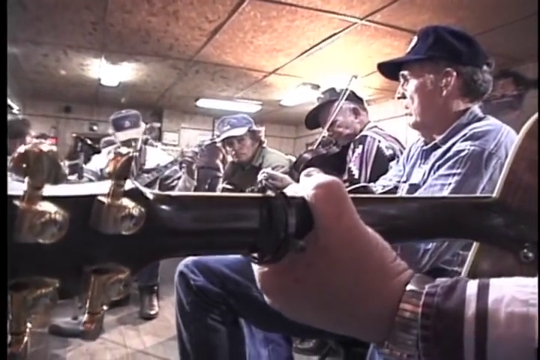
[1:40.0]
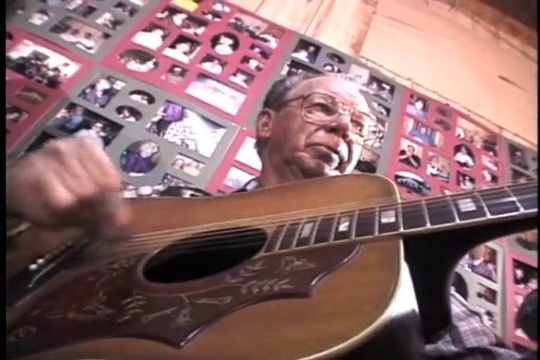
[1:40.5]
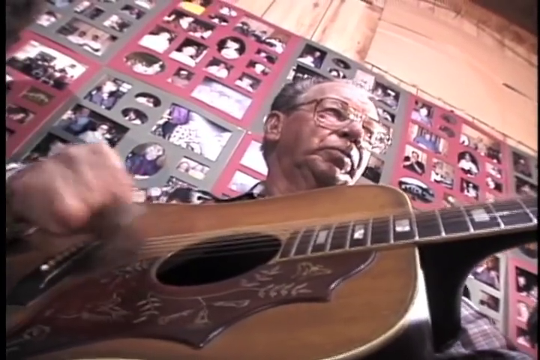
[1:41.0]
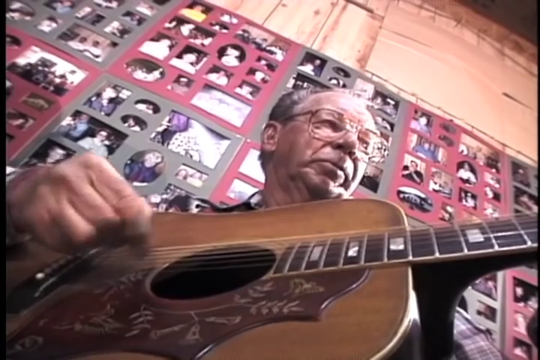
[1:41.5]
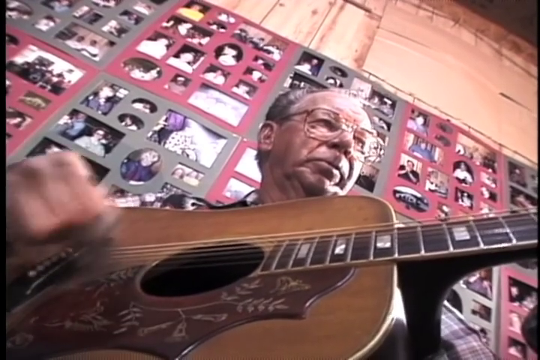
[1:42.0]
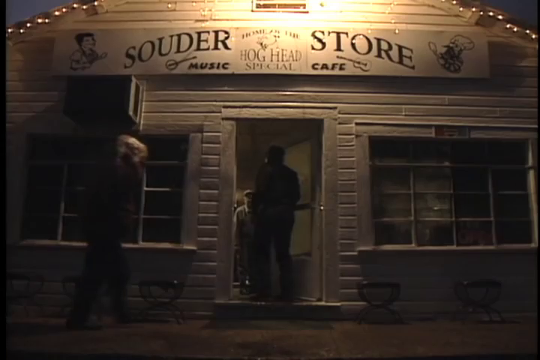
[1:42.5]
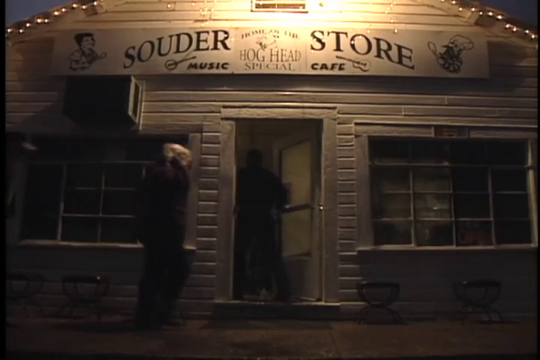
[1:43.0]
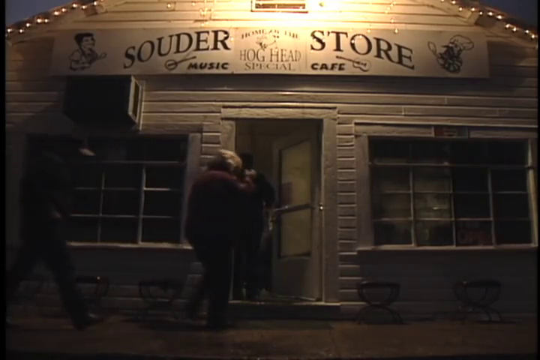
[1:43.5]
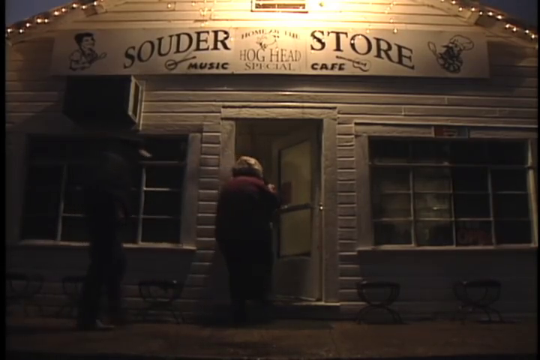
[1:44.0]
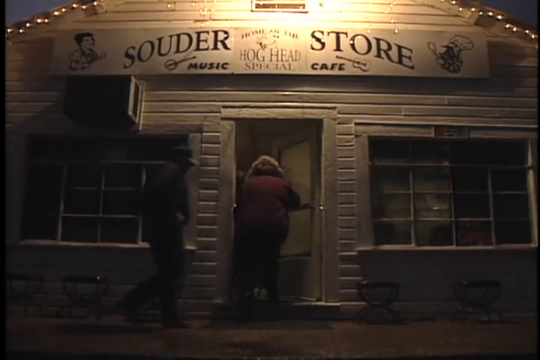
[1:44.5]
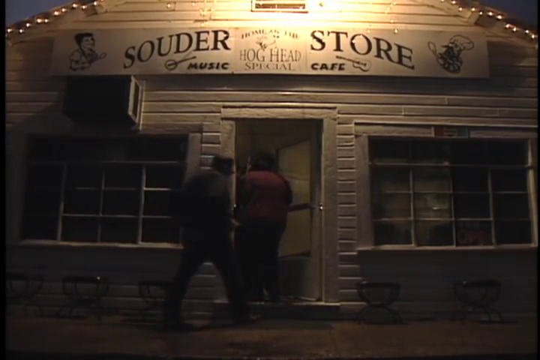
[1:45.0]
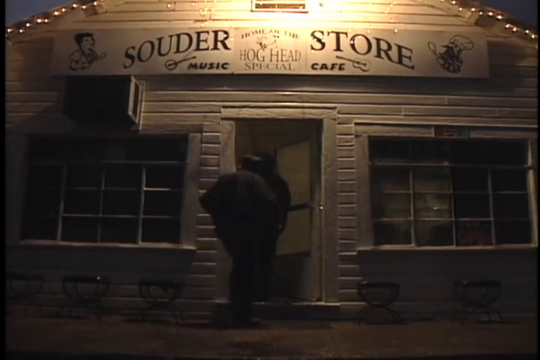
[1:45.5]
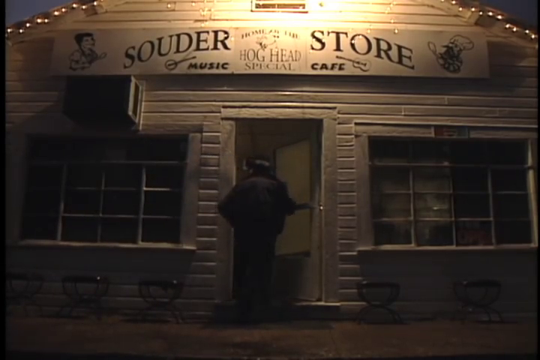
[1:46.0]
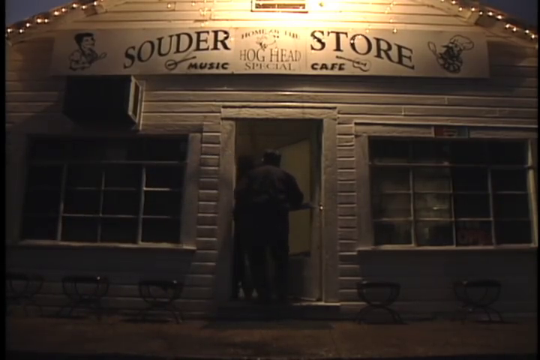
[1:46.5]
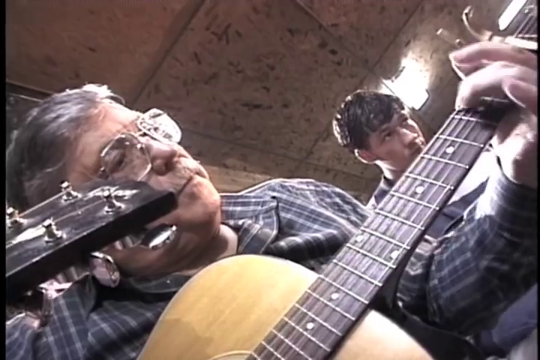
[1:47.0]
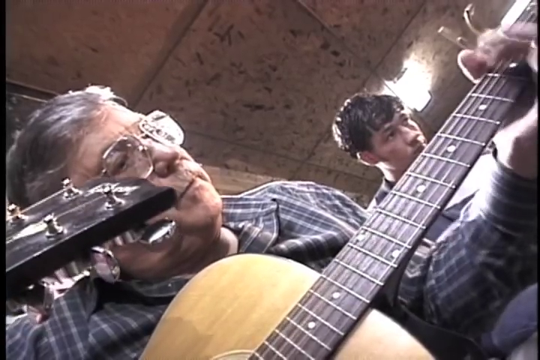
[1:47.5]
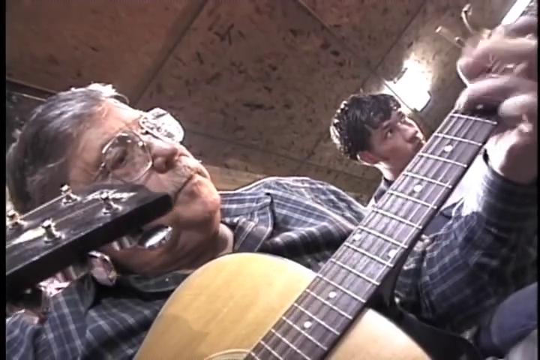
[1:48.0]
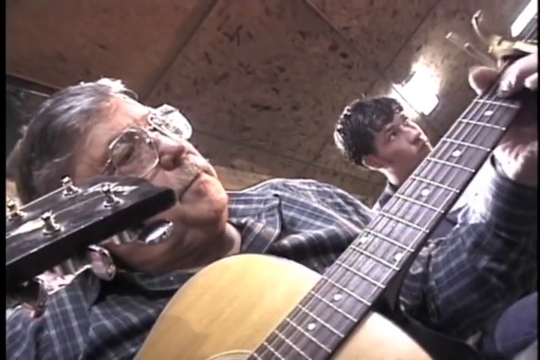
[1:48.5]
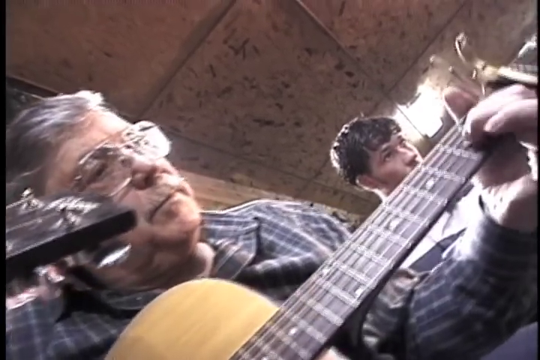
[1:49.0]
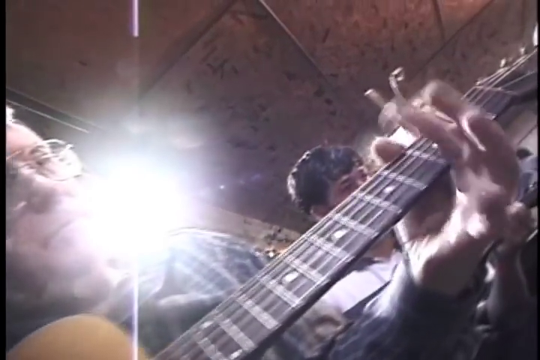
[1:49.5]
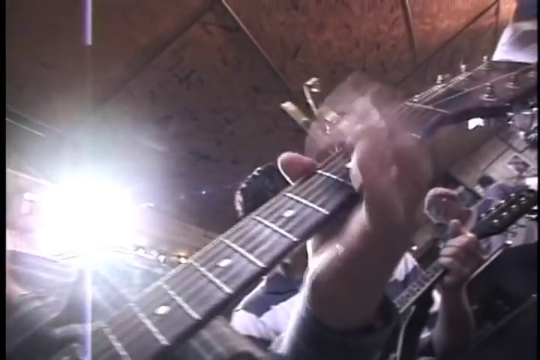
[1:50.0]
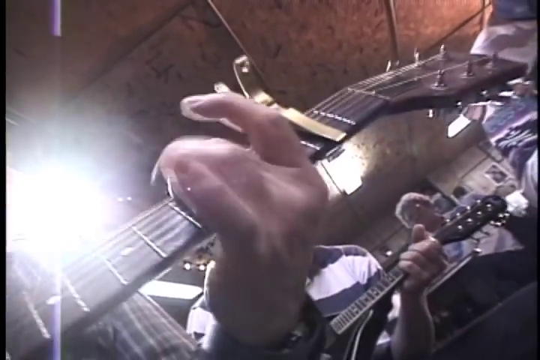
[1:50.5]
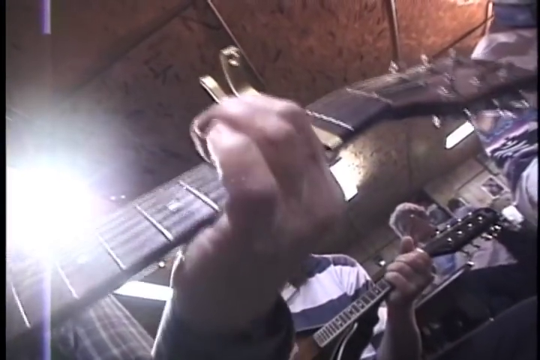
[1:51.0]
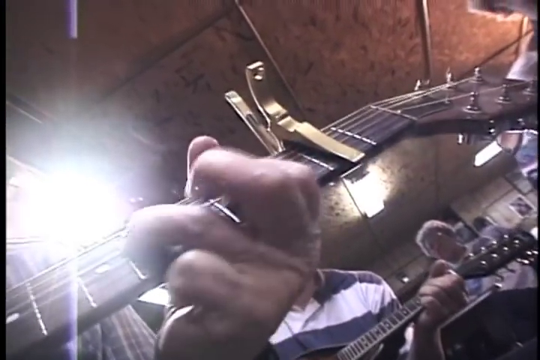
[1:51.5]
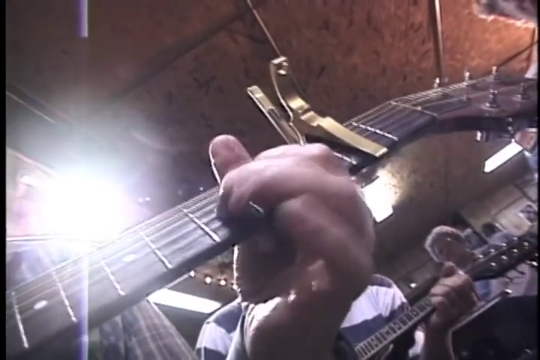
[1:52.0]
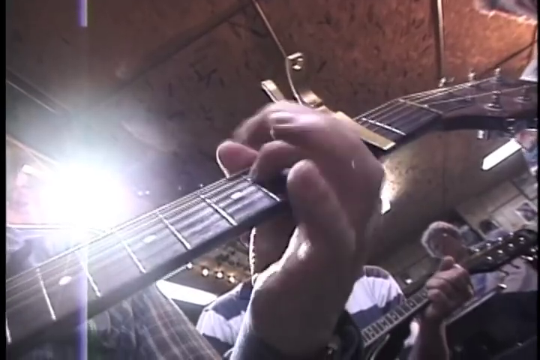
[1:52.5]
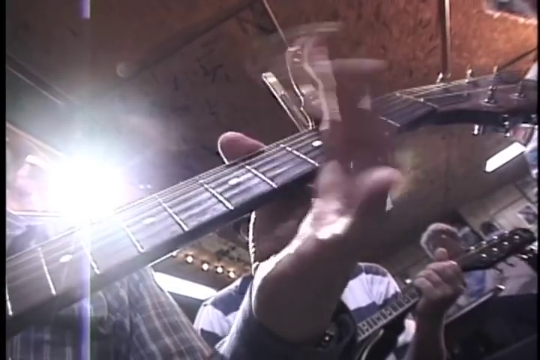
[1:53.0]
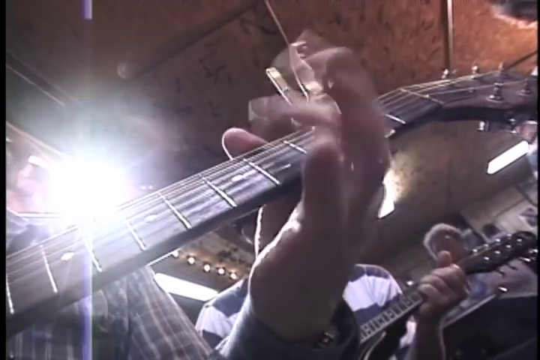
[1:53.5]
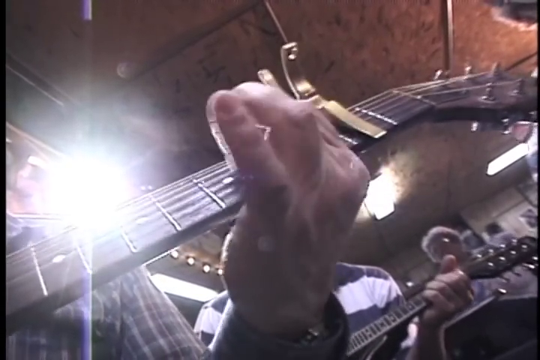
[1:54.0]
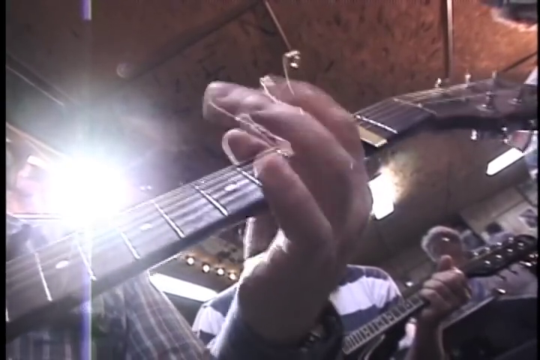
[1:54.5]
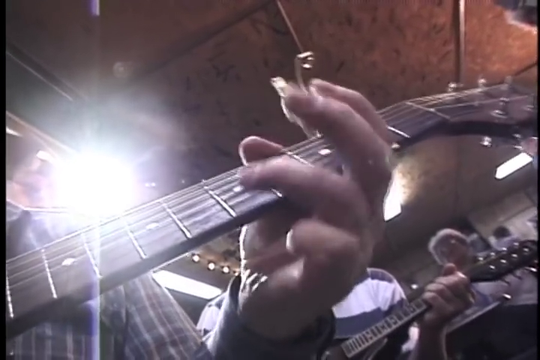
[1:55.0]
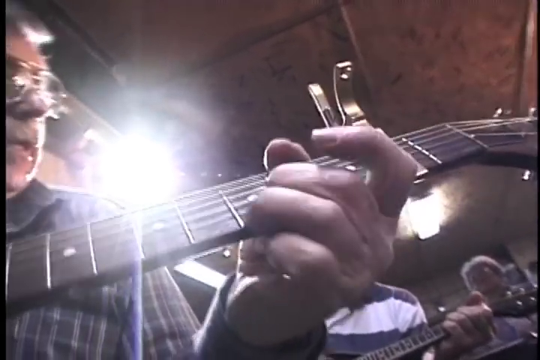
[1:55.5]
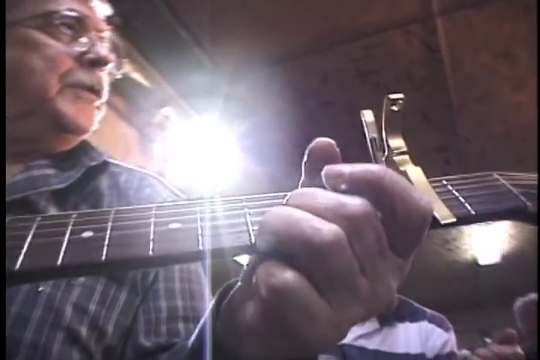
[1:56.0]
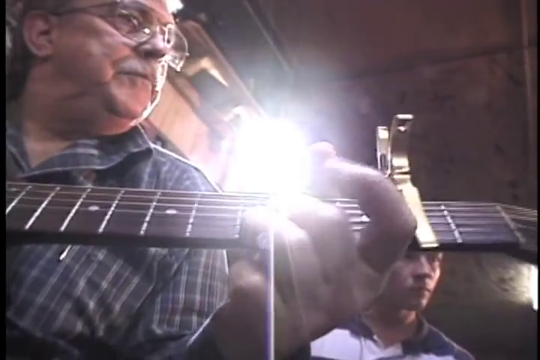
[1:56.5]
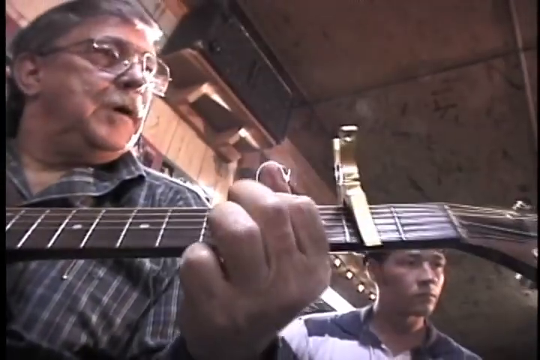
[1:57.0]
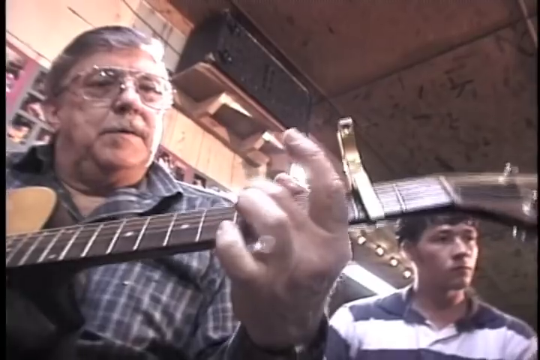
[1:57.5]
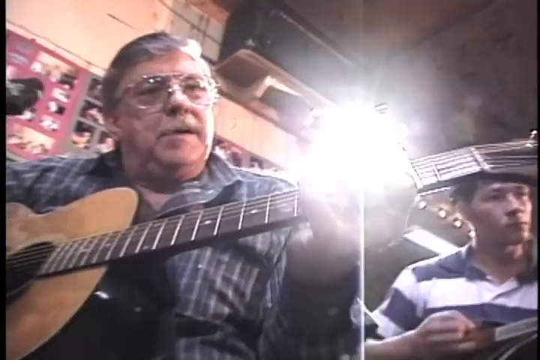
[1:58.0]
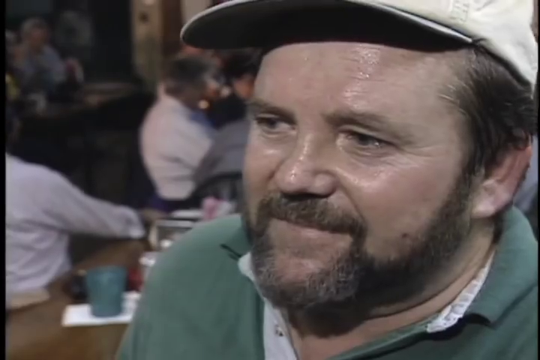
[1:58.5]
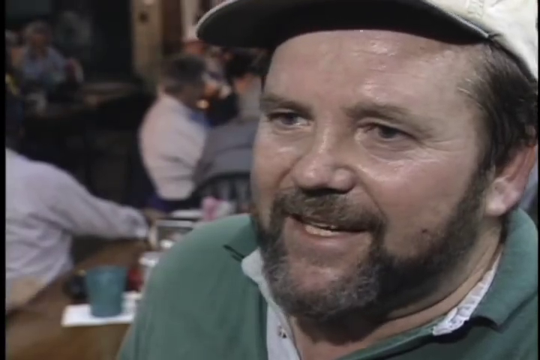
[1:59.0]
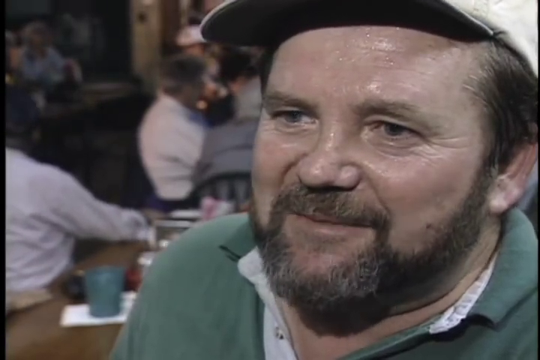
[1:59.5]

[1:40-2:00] A semicircle of men playing is shown, moving very quickly to a single individual who sits in front of a wall of alternating pink and gray squares, all covered by photographs. At the top left is half of a gray square resembling the bottom of a diamond shape, with a pink square joining on from it diagonally, and more pink and gray below. The man's hand appears, plucking the strings of his guitar. He is an older man with tufty hair above his ear and glasses, apparently in his 70s or 80s. Another shot shows the front of the place, with its name in two words on either side of a central square, the first spelled "SOUDER". The central square holds some text and a logo that cannot be read, and below that is "Hog Head Special". On the left is "music" and on the right "cafe". On either side is a depicted musical instrument: on the left-hand side, under the first word, what looks like a banjo, and on the right-hand side what looks like a guitar. More people are seen entering from outside.